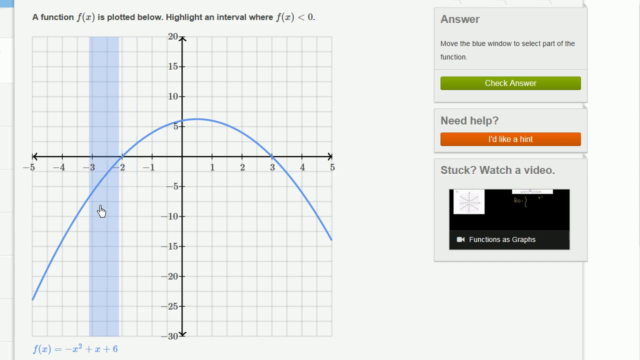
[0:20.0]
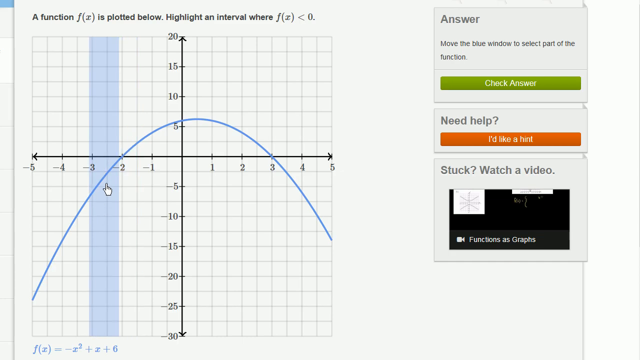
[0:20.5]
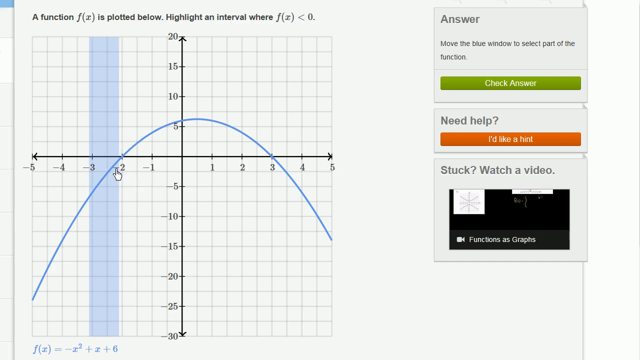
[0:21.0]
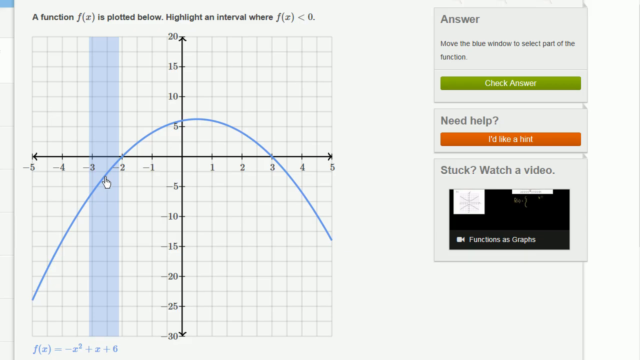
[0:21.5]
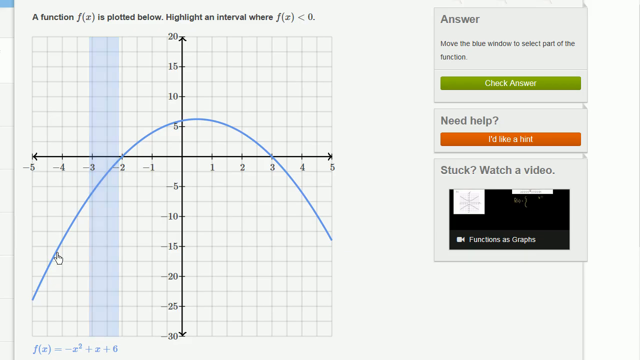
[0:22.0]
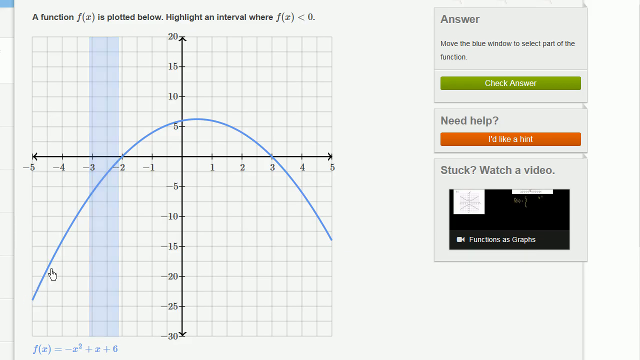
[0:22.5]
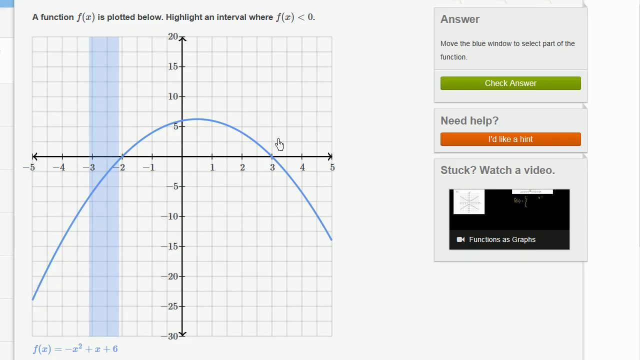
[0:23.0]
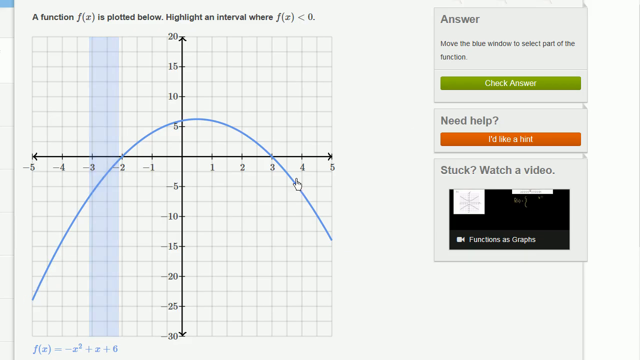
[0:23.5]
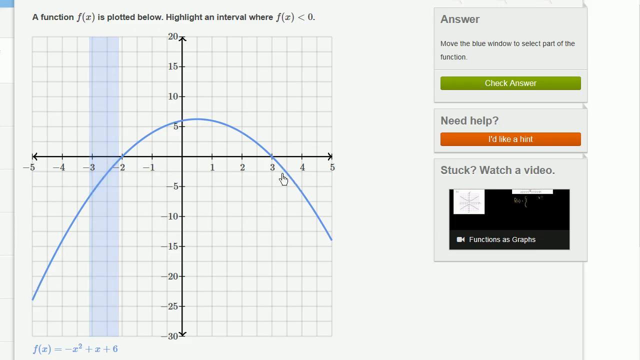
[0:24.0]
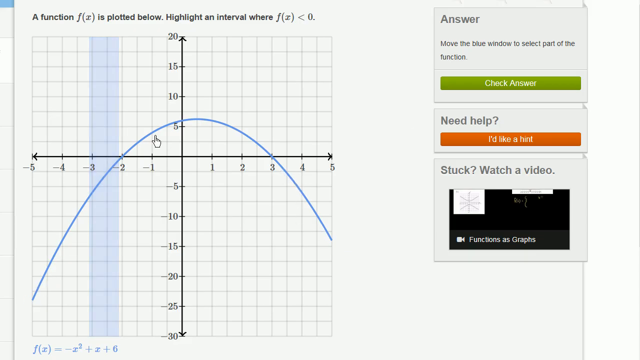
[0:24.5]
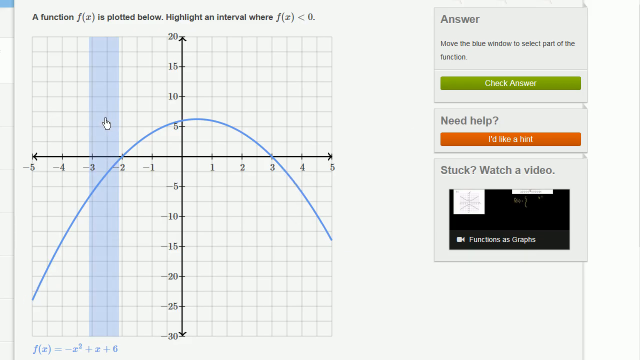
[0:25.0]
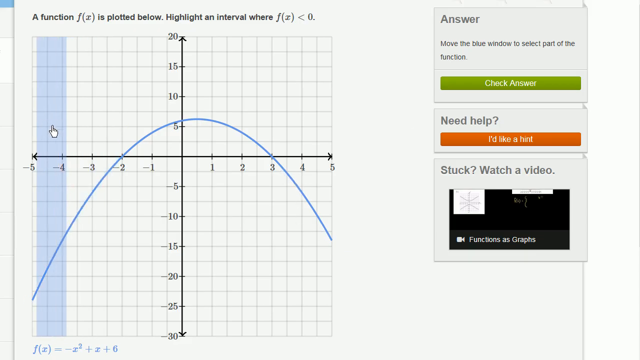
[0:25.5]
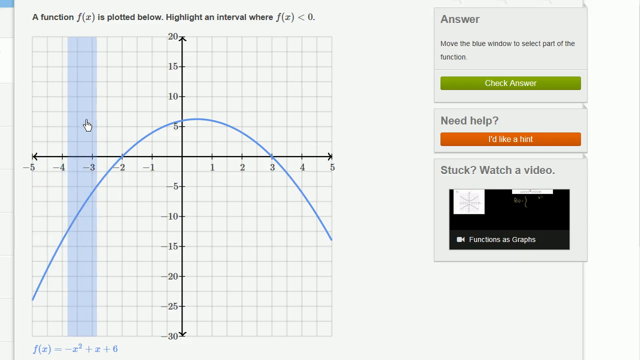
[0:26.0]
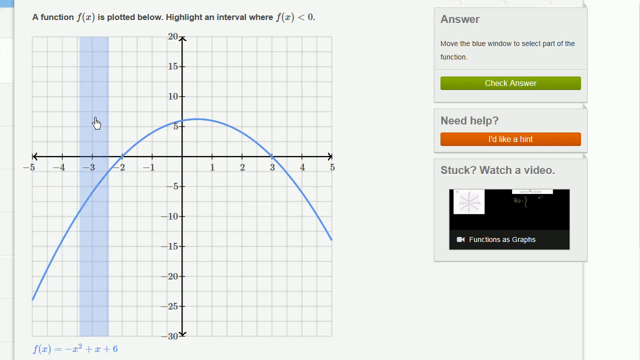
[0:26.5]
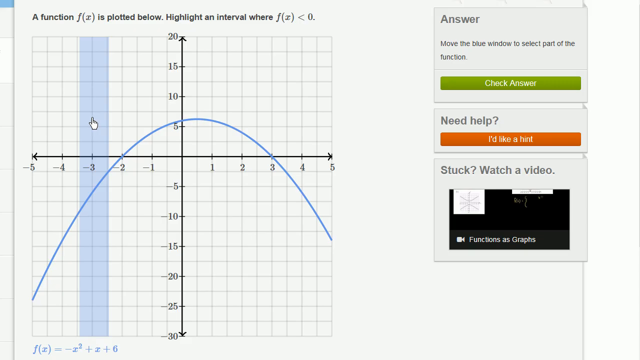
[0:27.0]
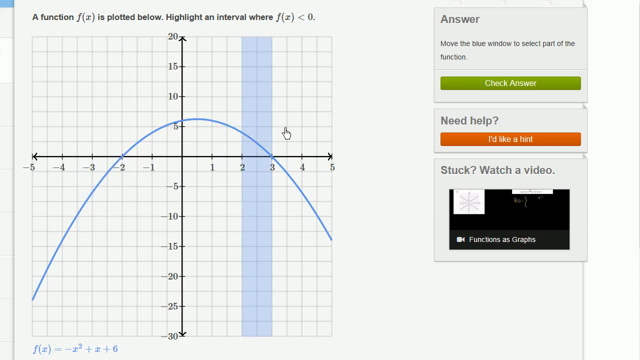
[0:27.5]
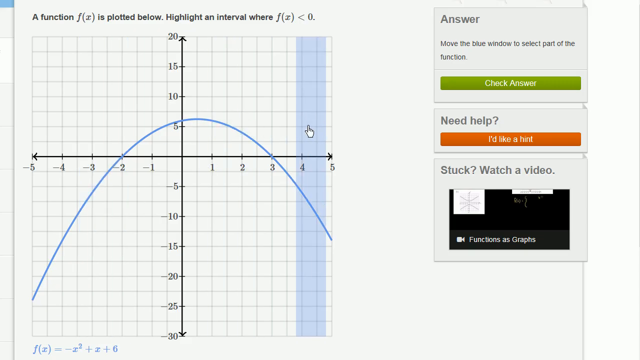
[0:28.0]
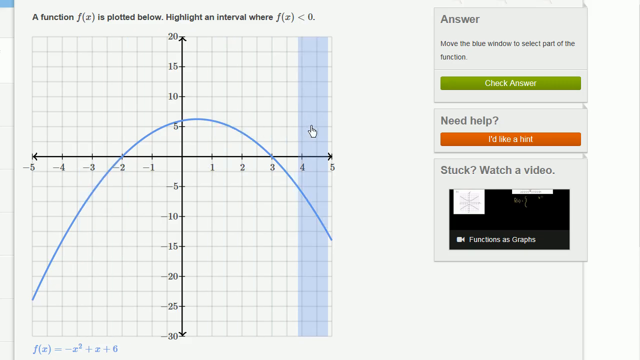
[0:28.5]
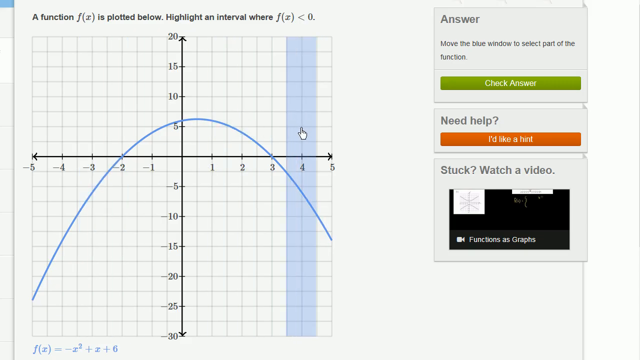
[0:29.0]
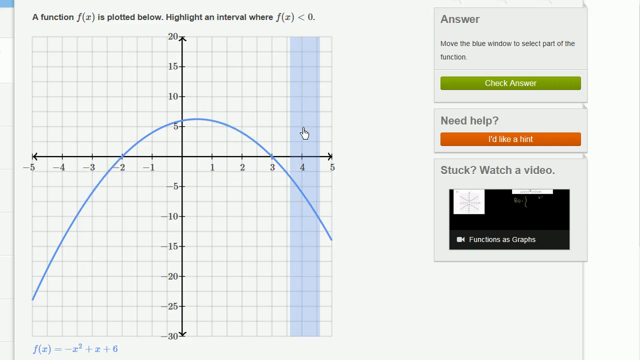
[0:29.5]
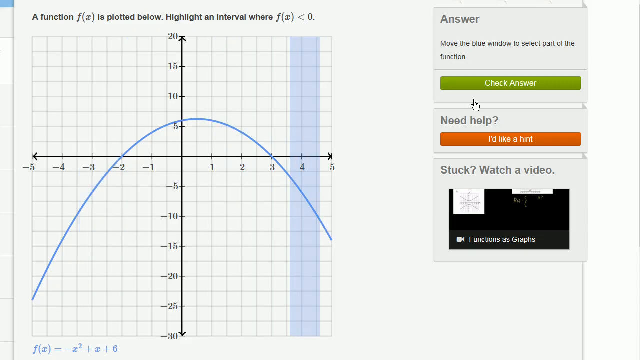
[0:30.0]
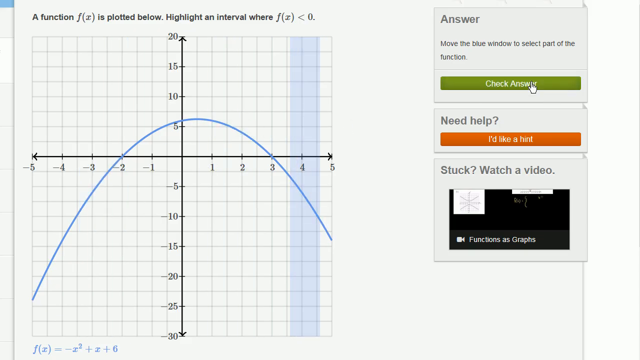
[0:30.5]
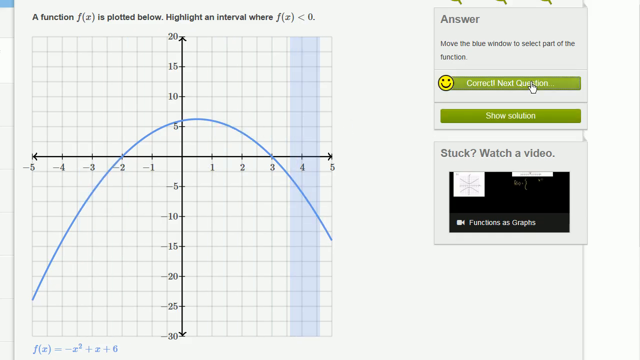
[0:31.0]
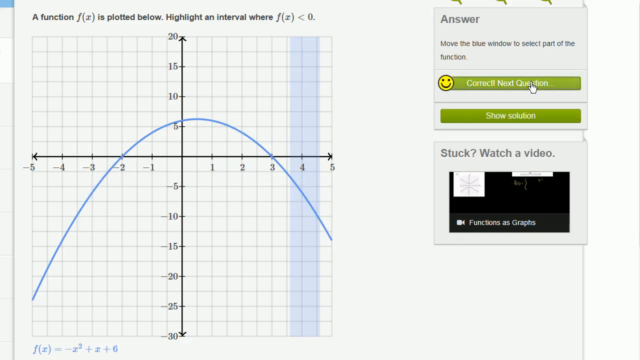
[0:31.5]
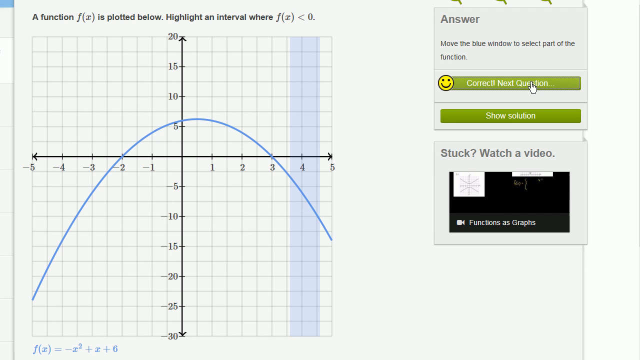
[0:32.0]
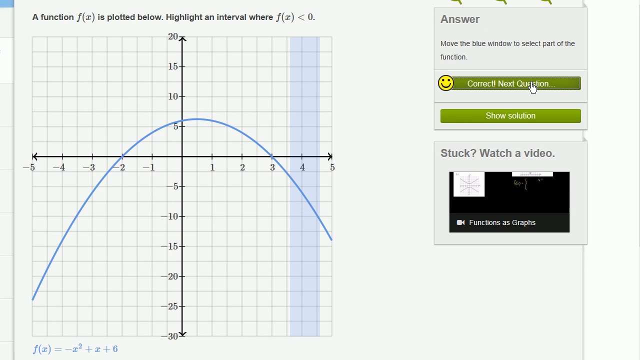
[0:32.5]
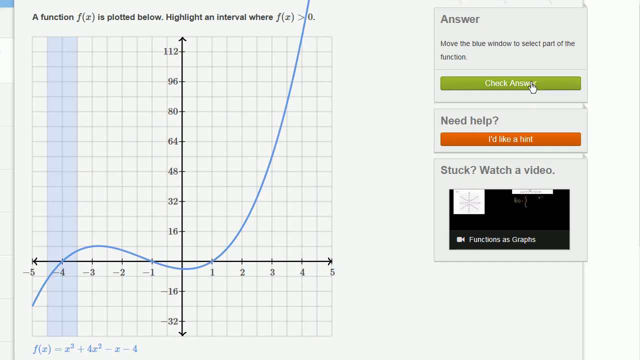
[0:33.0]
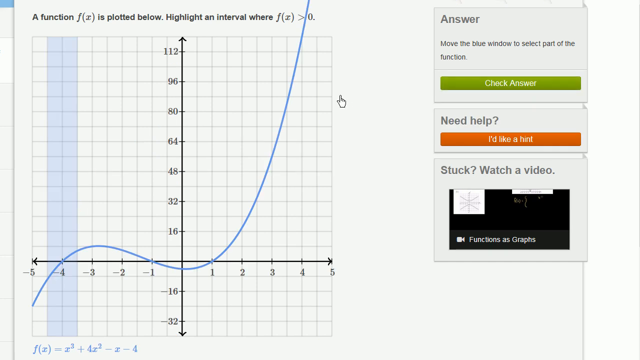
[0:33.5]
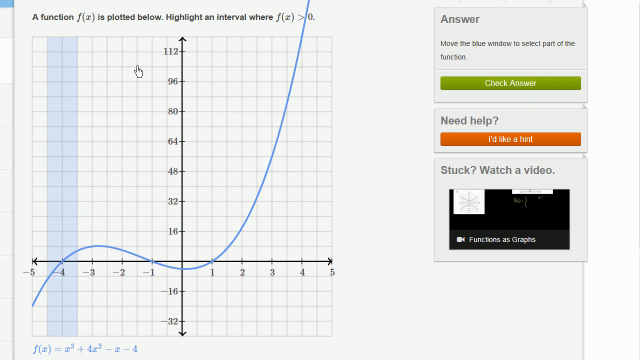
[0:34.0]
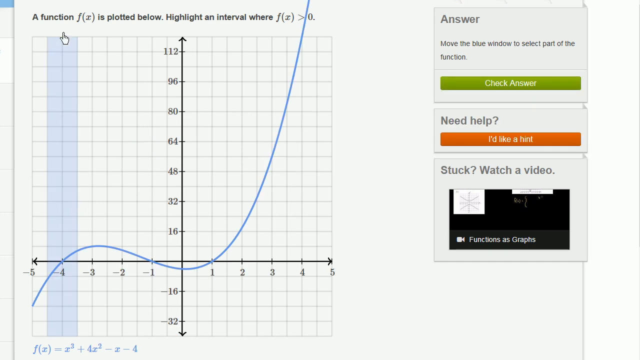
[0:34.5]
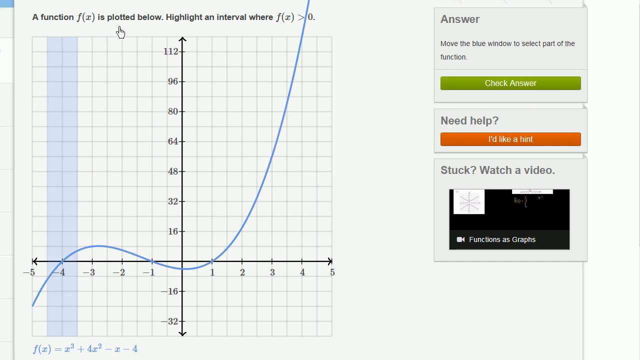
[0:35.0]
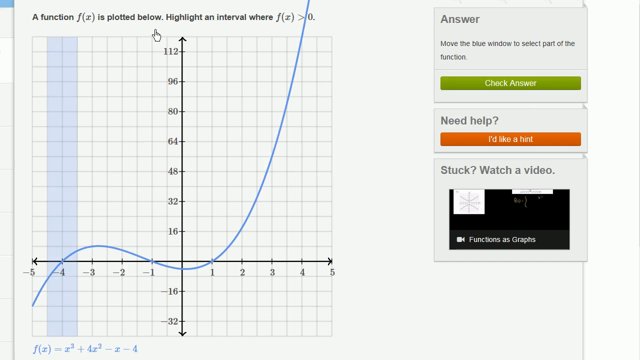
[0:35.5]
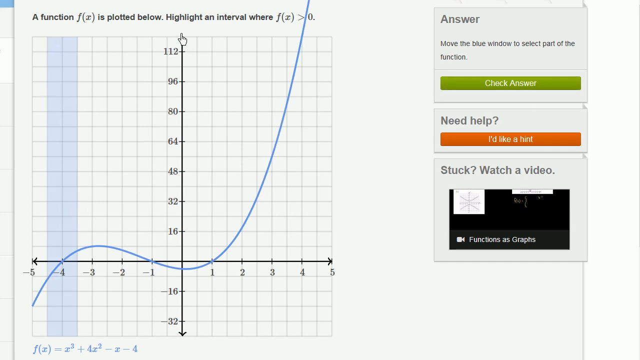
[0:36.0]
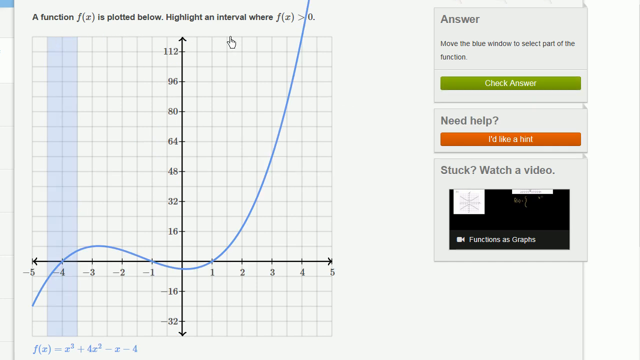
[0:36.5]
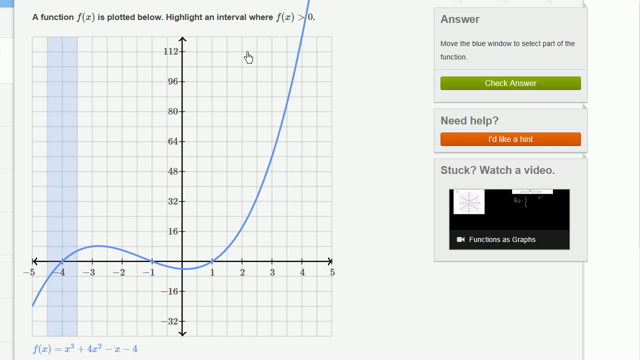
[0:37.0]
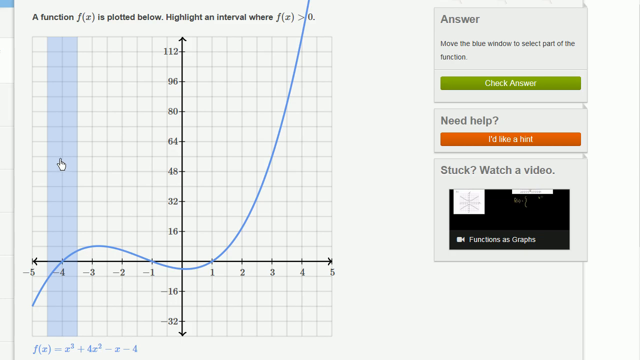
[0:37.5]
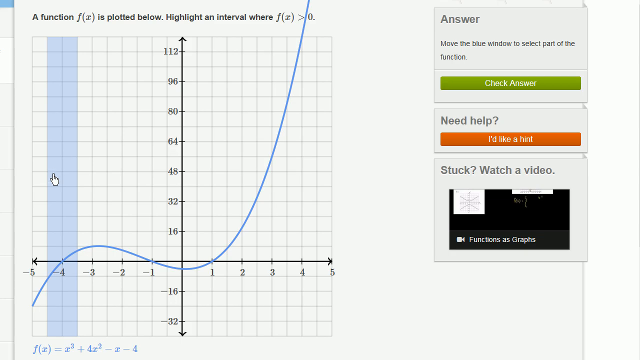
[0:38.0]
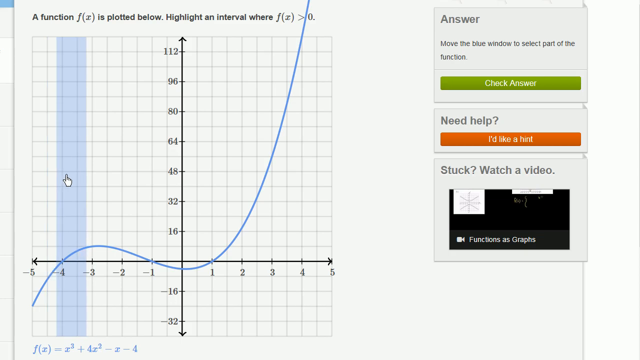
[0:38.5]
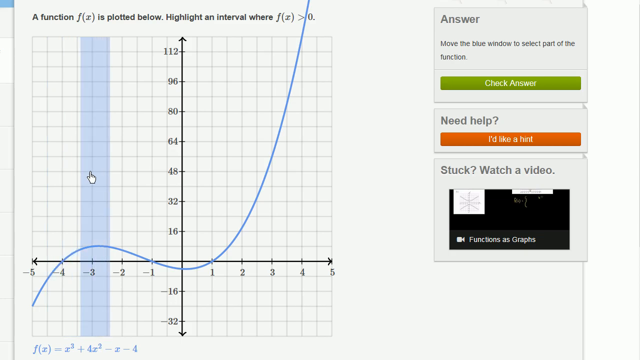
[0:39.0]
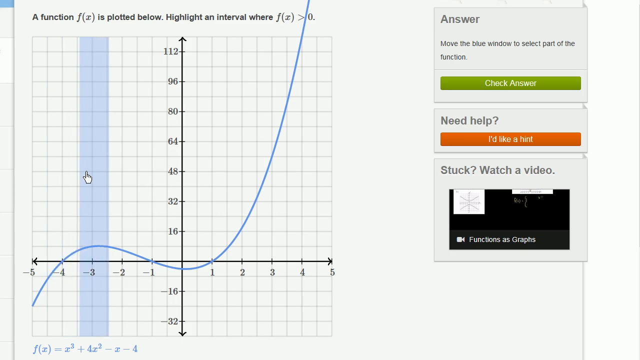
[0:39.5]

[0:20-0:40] The same downward-opening graph remains on the page. A blue shaded region is to the left of the origin, like a very narrow rectangular box running up and down the whole length of the grid. The mouse moves up and down the curve, then the person moves the shaded region left and right; it does not move up and down. After moving it to the right, the person clicks check answer, and the result shows the answer is correct. The screen then transitions to another function, apparently a cubic like x cubed: the graph increases for a bit, tops out at a relative max, decreases to a relative min, and then increases again. The same shaded rectangle is there. Text reads "the function f of x is plotted below. highlight the intervals where f of x is greater than zero." The person moves the cursor over the curve.